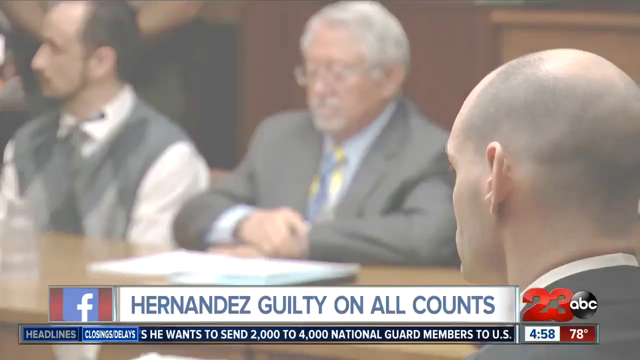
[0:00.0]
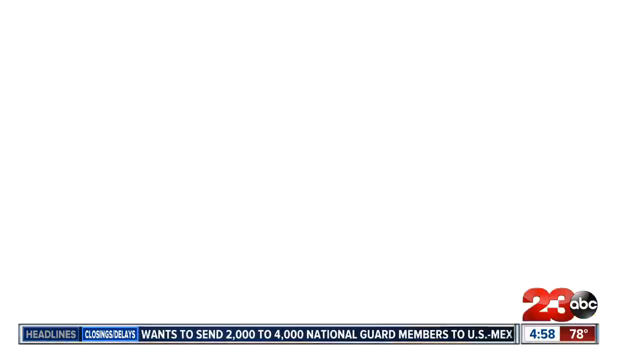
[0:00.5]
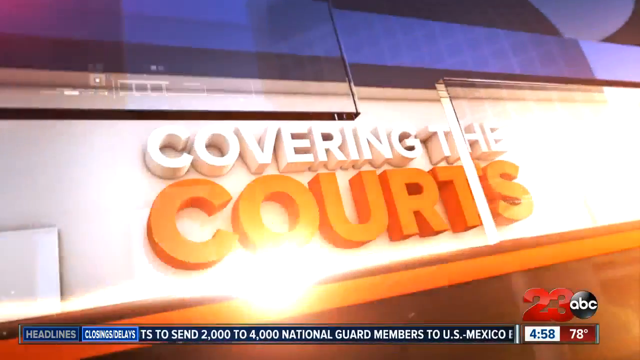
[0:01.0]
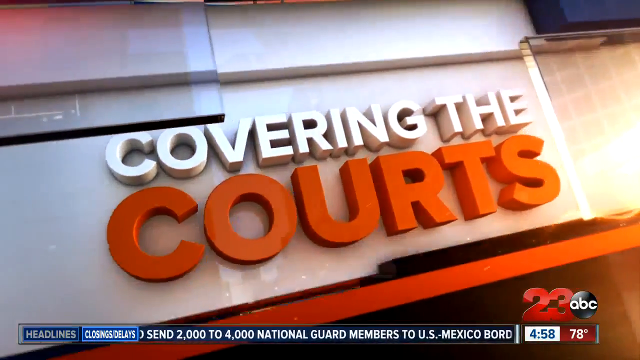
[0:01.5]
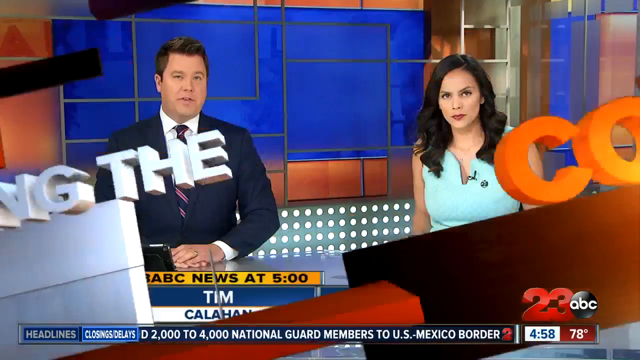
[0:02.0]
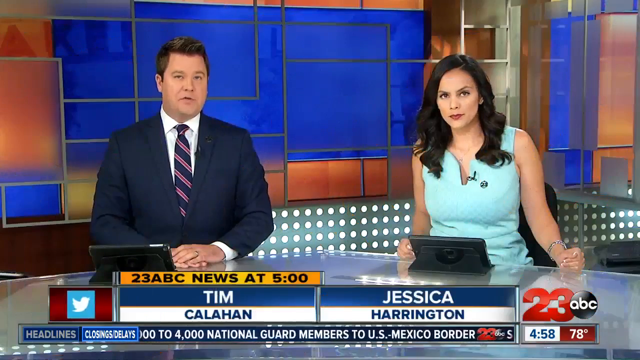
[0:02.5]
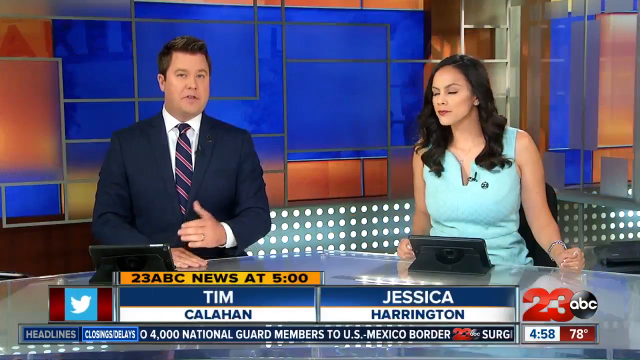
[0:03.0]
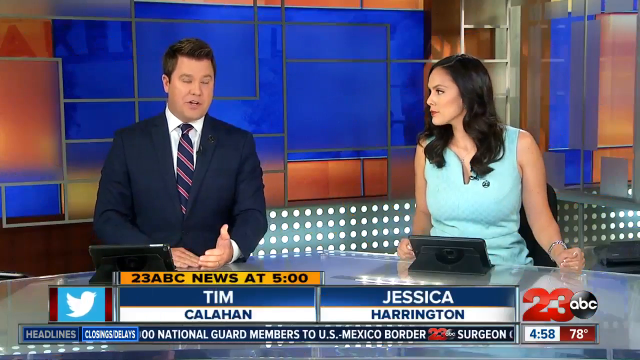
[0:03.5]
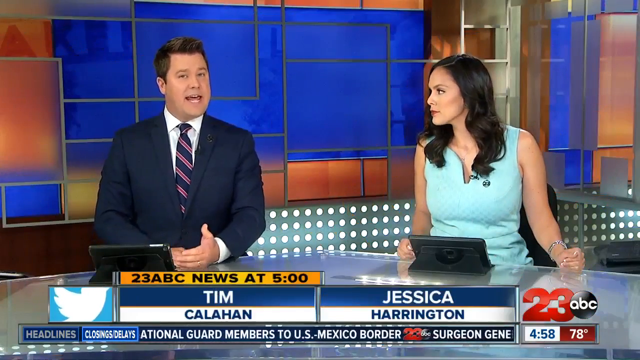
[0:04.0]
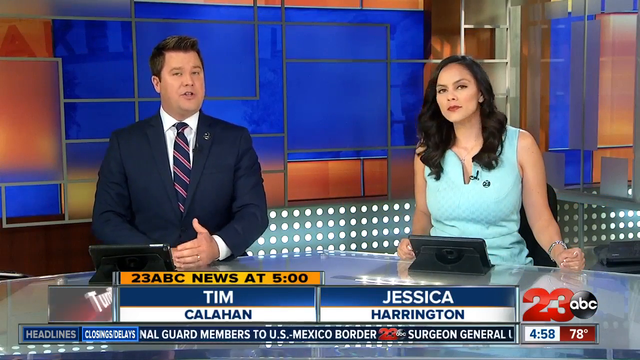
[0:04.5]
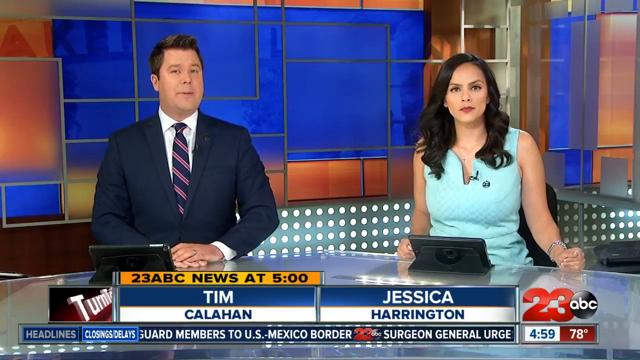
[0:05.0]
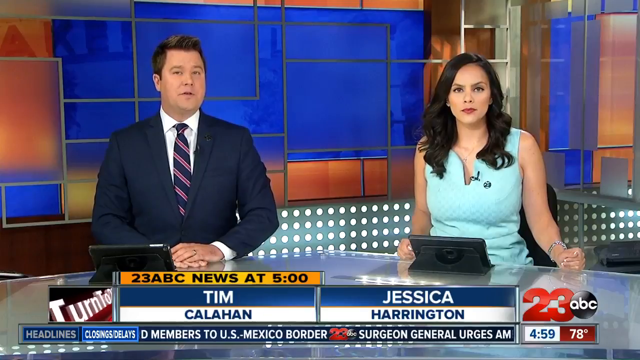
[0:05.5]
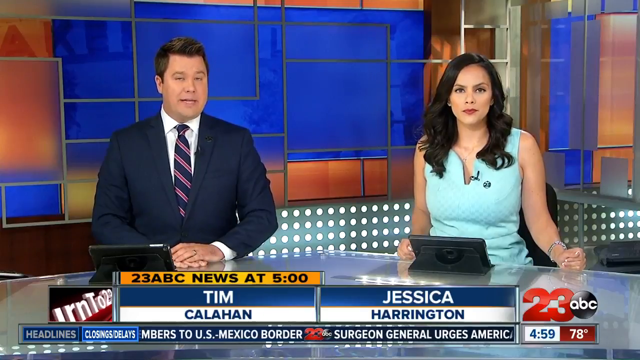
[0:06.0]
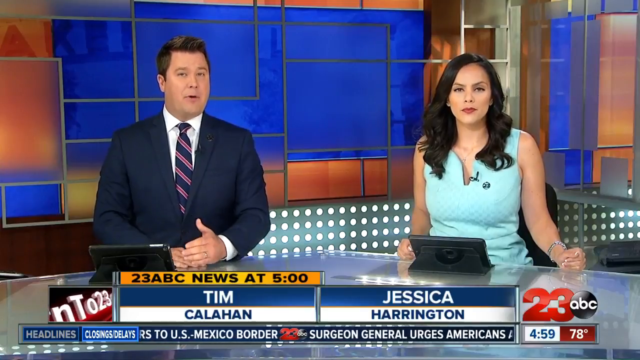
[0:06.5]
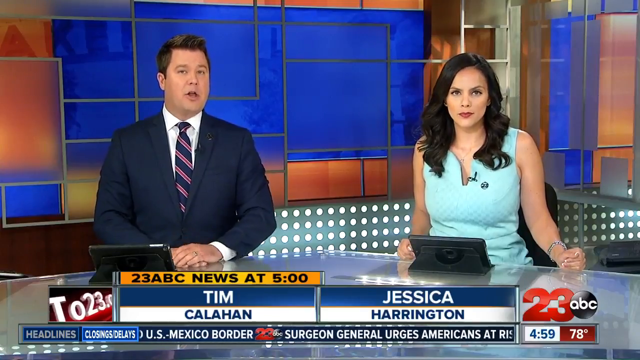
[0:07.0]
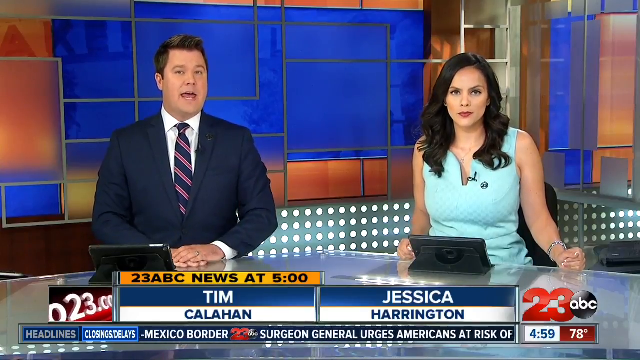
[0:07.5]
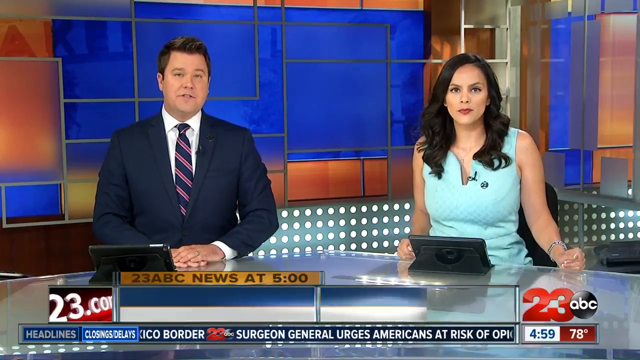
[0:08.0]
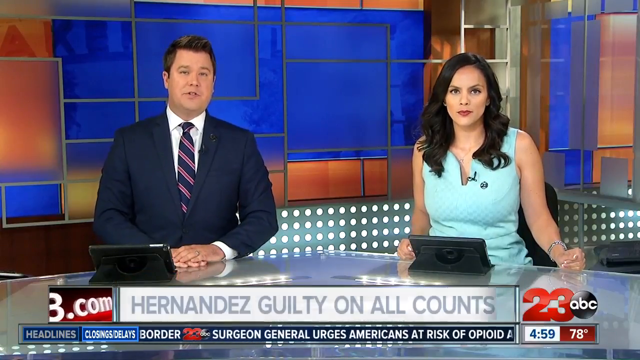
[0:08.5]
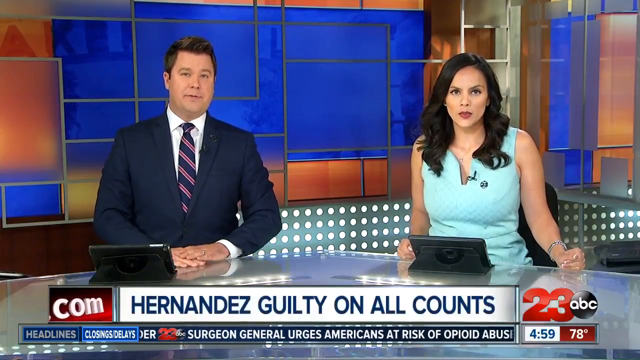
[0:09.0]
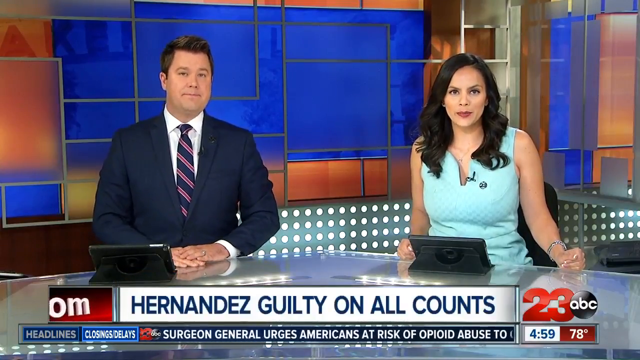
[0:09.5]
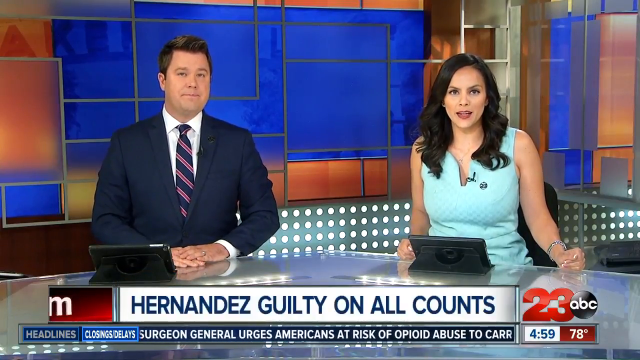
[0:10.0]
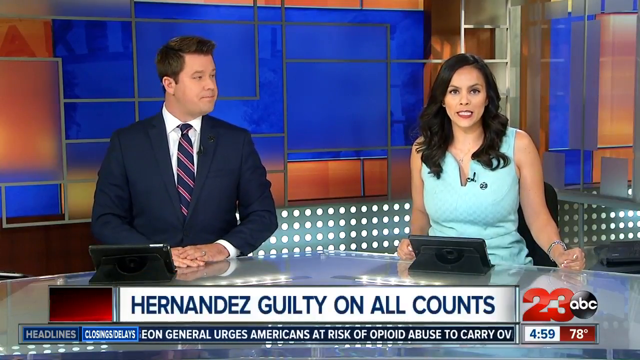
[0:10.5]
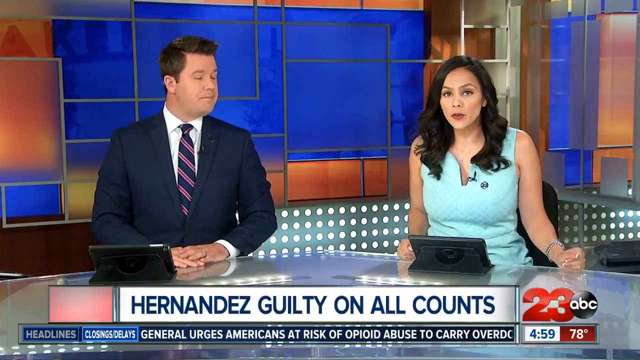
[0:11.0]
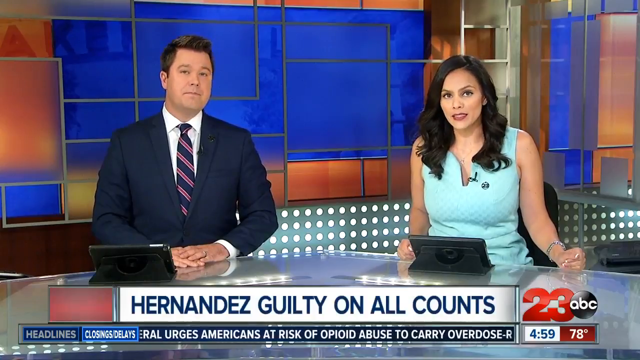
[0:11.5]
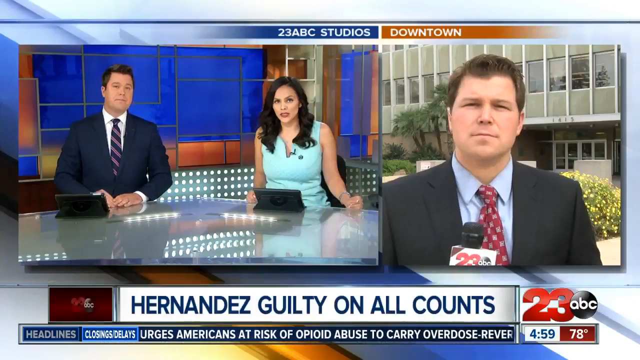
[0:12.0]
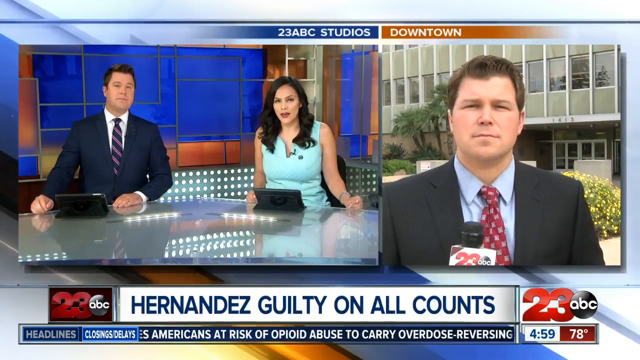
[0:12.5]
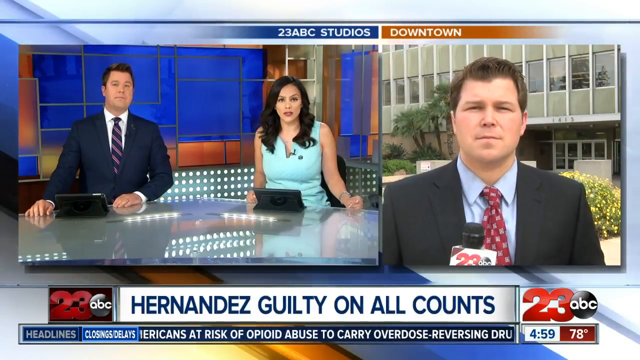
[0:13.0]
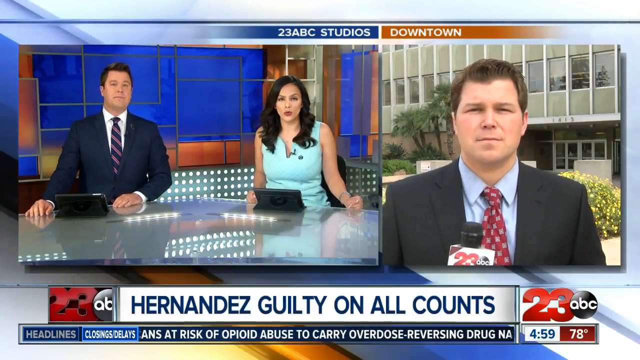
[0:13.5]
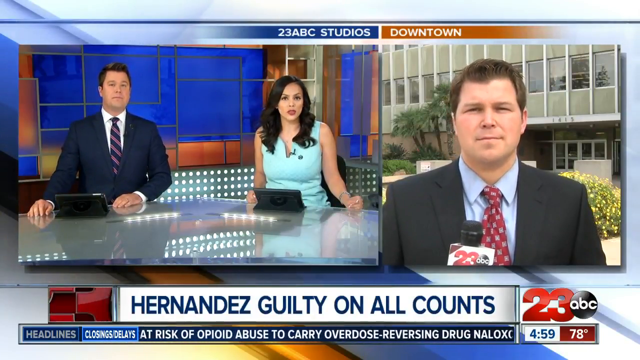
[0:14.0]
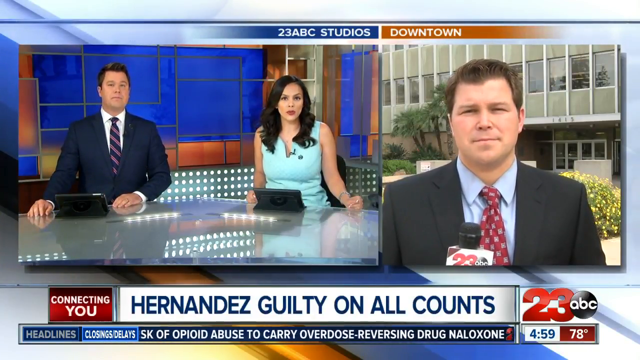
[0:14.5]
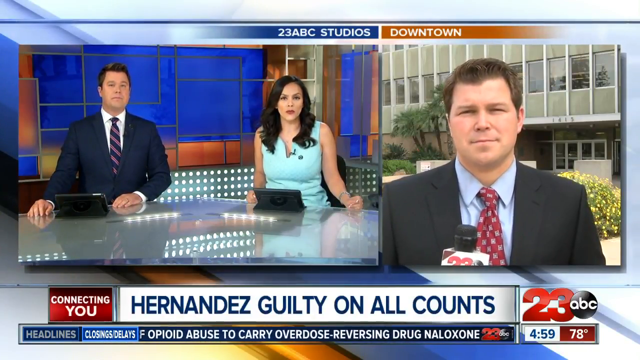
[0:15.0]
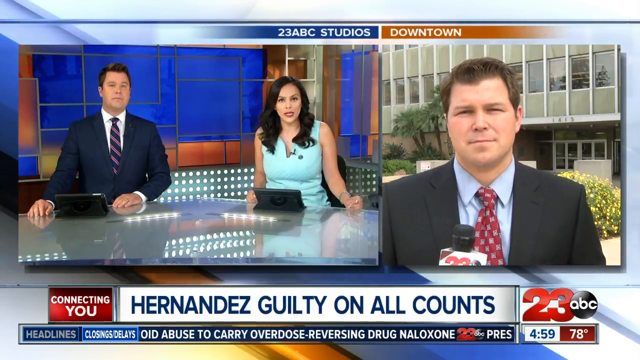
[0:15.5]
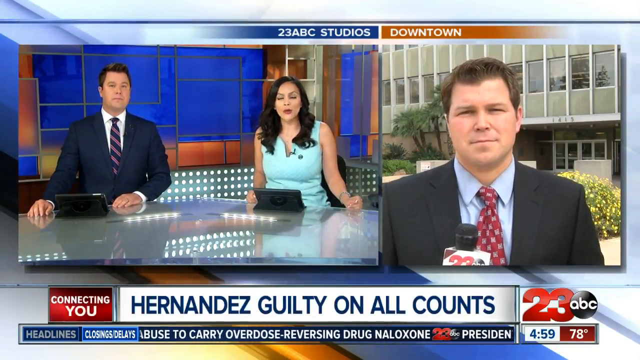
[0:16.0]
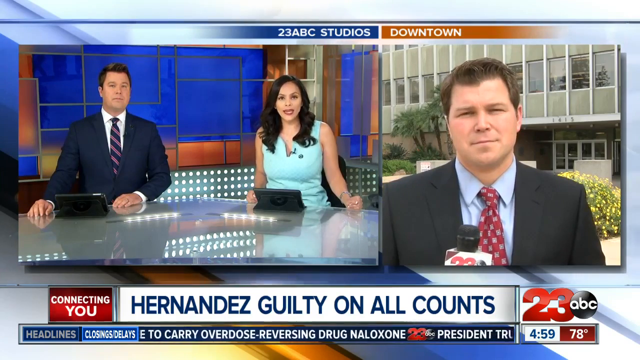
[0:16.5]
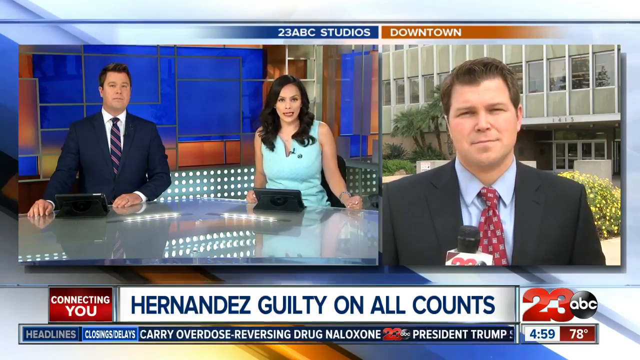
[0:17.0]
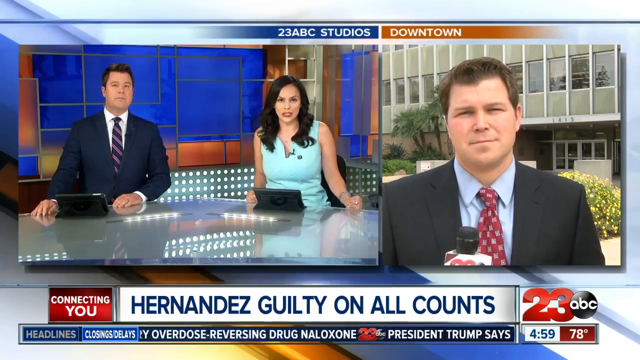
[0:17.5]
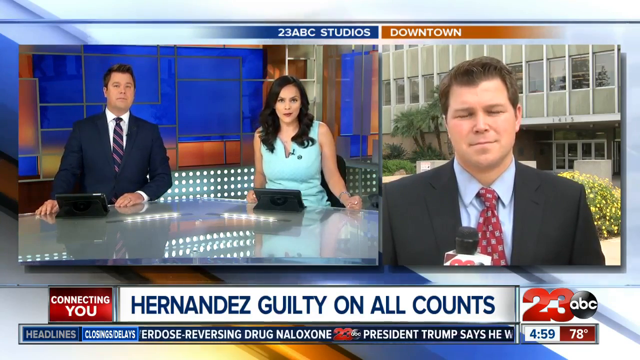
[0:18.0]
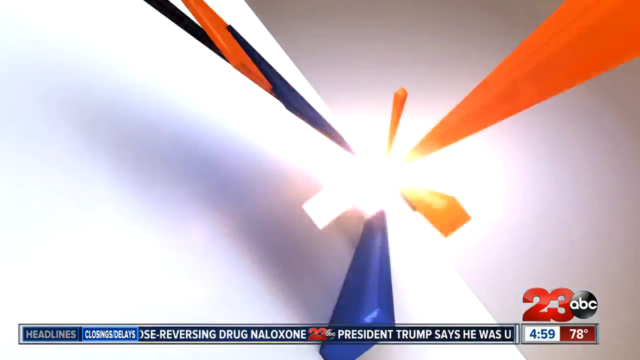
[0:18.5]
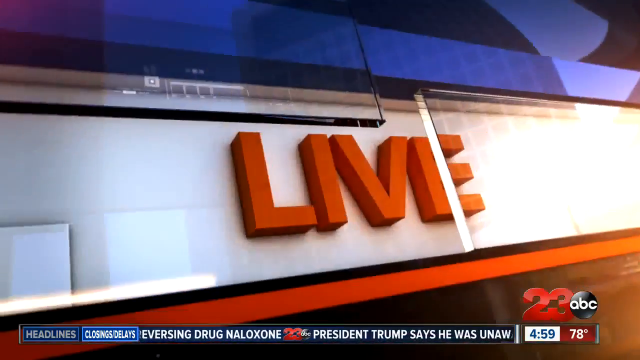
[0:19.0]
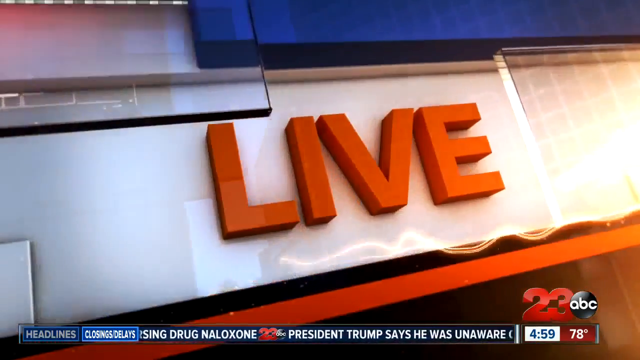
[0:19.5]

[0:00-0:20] An ABC News 23 broadcast carries the headline "Hernandez guilty on all counts." Along the bottom of the screen, other stories are listed: "2000 to 4000 National Guard members will be sent to US-Mexico border," "Surgeon General urges Americans at risk of opioid abuse to carry overdose reversing drug Naloxone," and "President Trump says he was unaware of" a sum of money. Reporter Scott Sheehan then reports the story in front of a building with the address 1415, possibly a building connected to Hernandez.